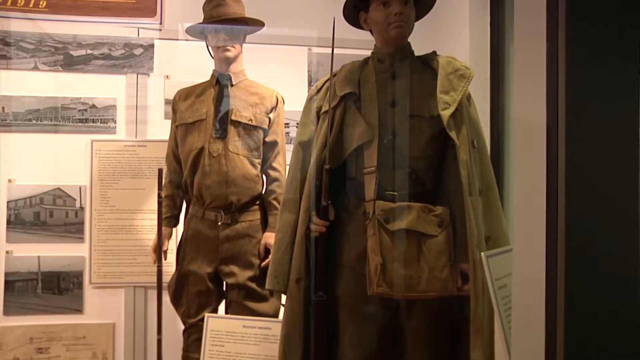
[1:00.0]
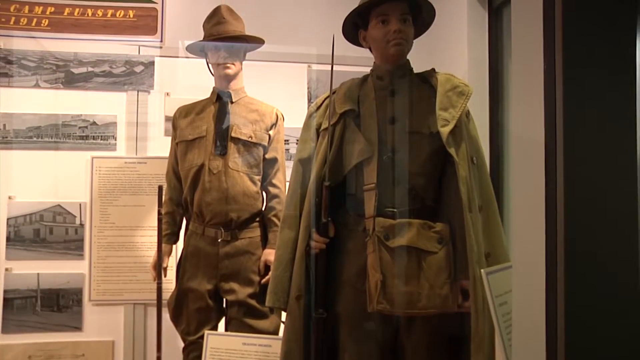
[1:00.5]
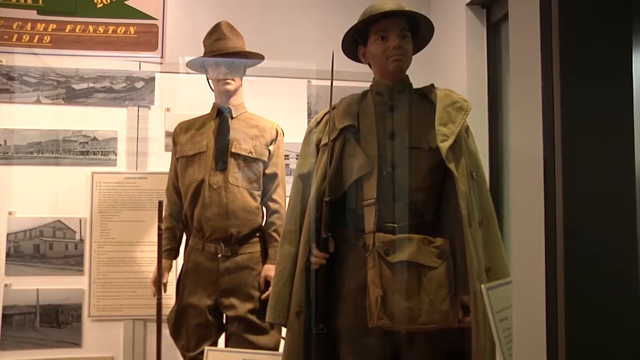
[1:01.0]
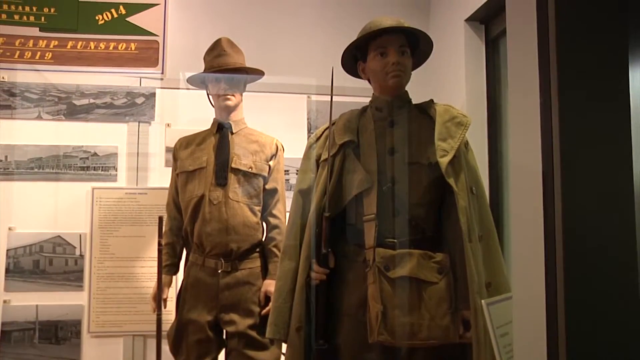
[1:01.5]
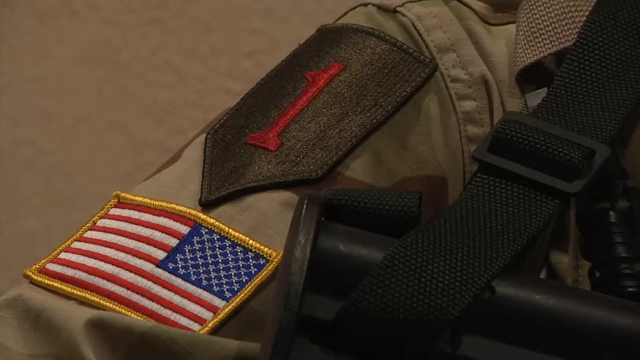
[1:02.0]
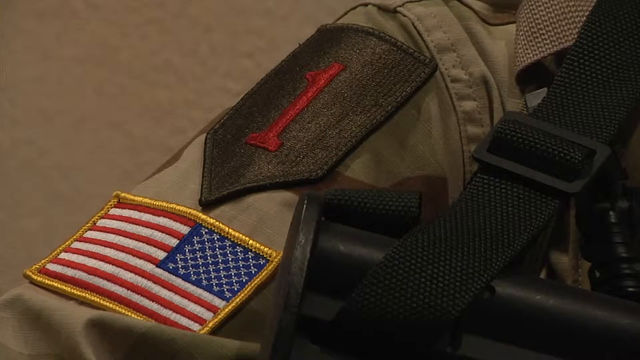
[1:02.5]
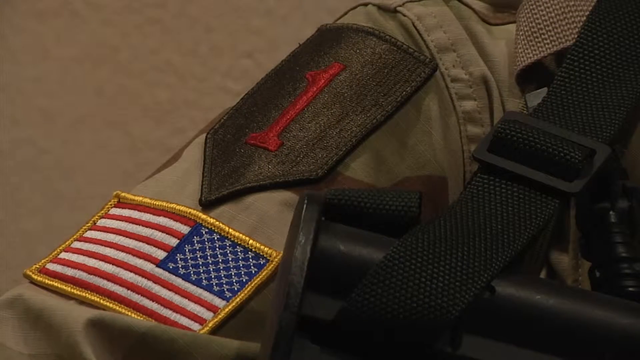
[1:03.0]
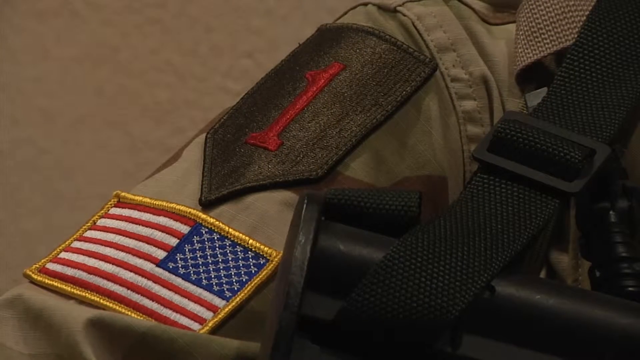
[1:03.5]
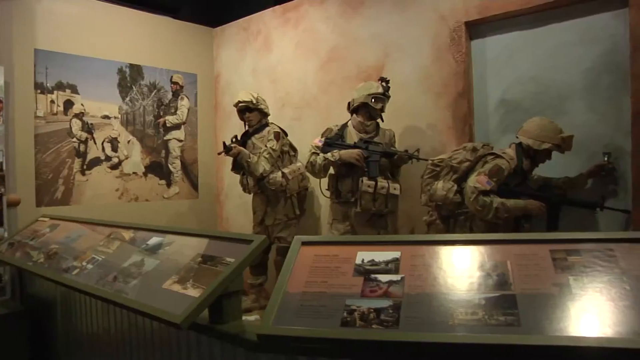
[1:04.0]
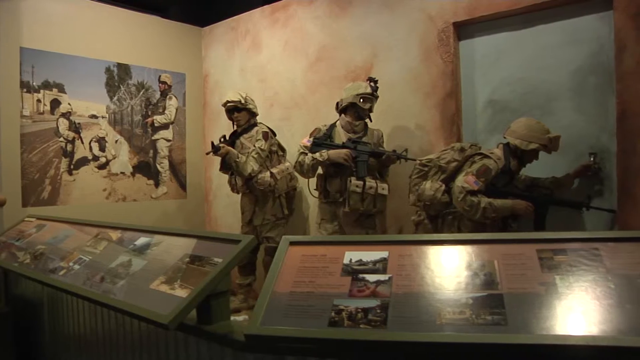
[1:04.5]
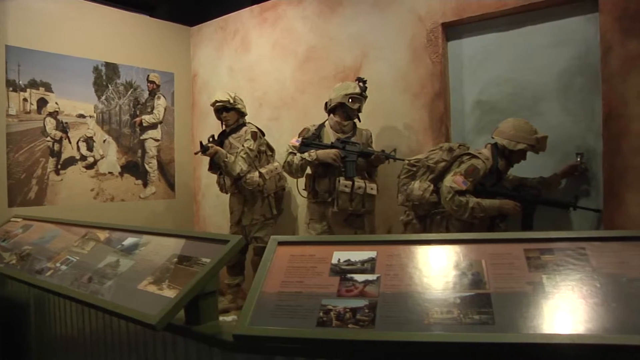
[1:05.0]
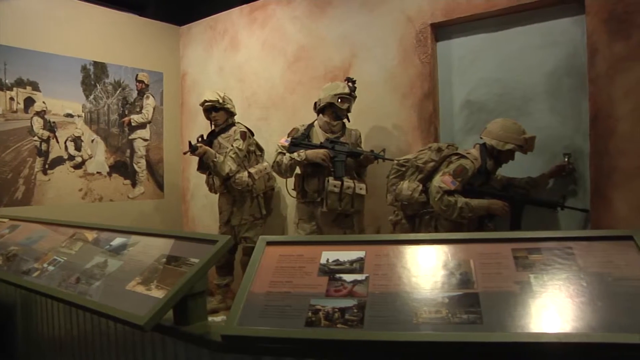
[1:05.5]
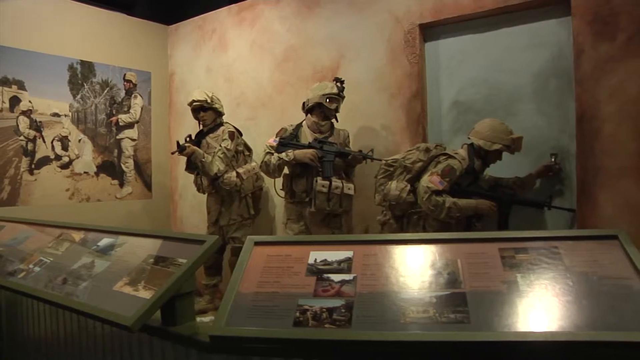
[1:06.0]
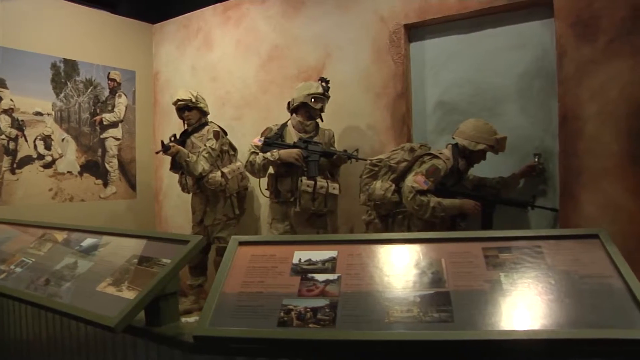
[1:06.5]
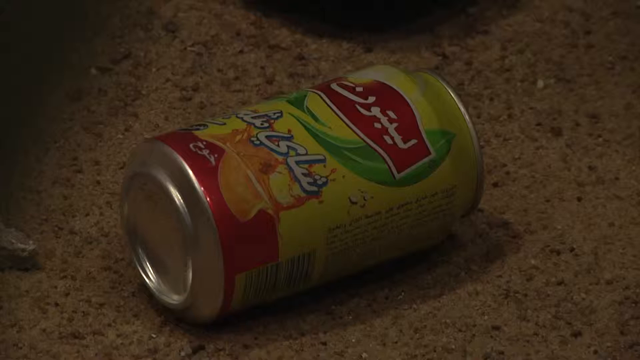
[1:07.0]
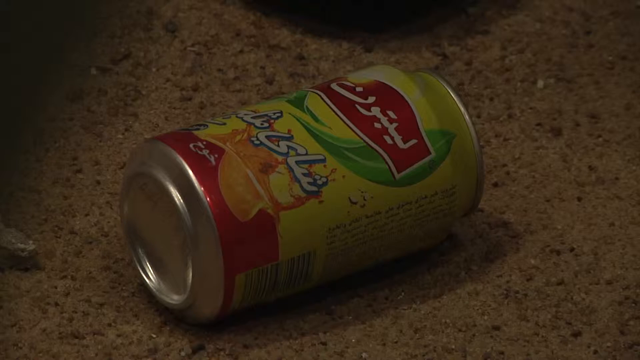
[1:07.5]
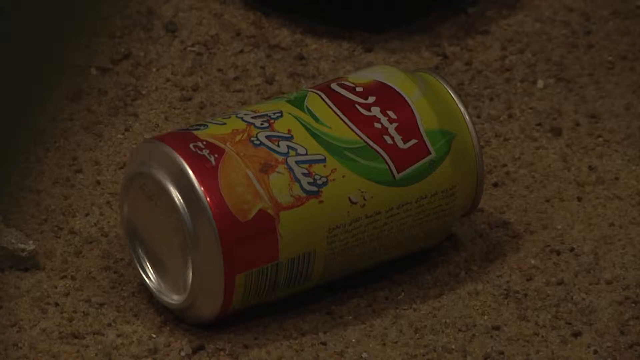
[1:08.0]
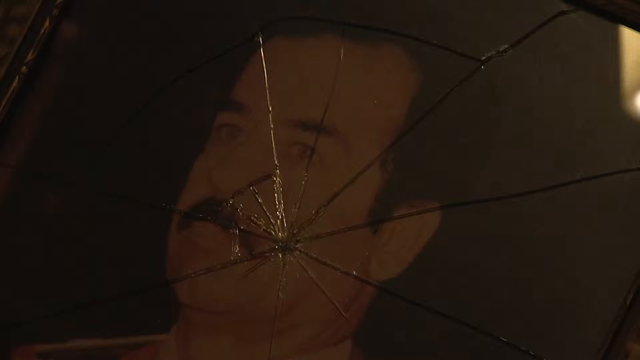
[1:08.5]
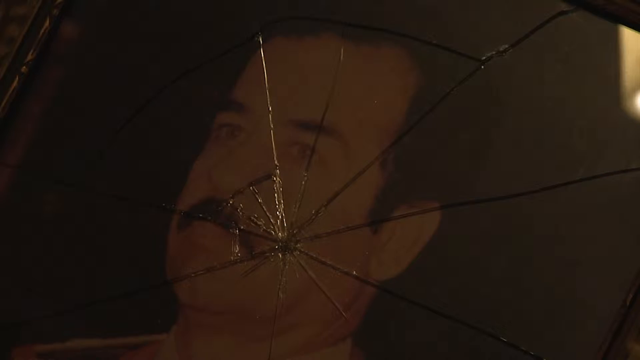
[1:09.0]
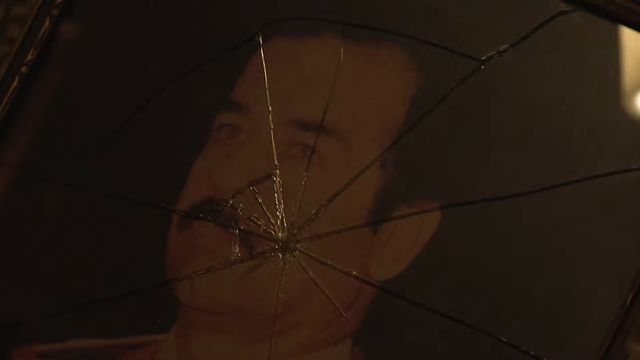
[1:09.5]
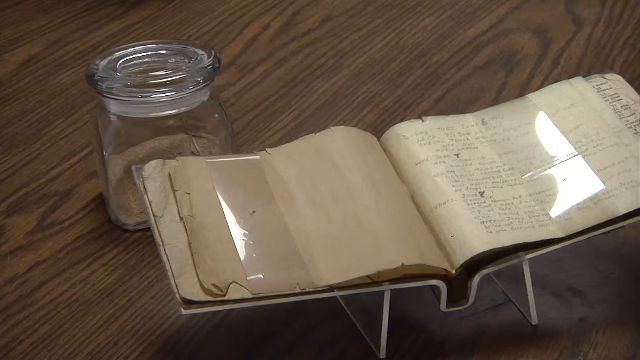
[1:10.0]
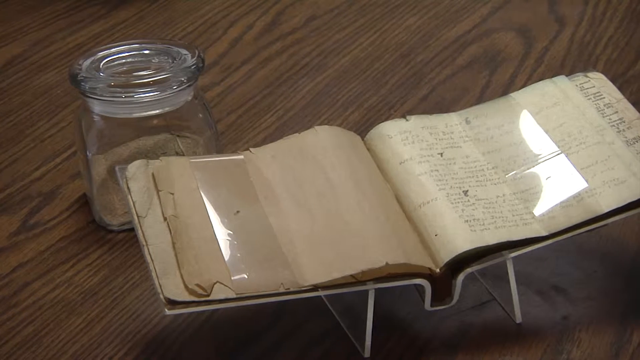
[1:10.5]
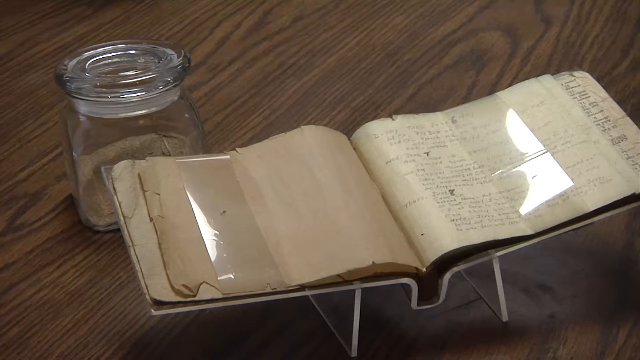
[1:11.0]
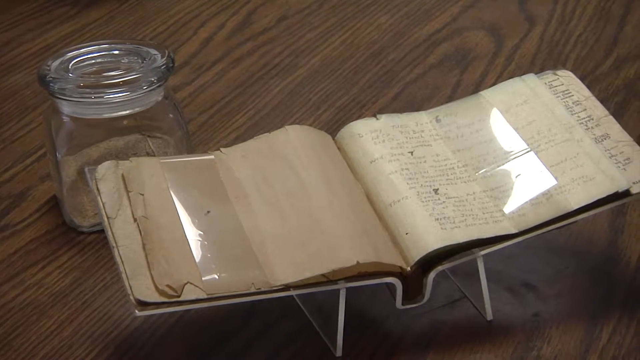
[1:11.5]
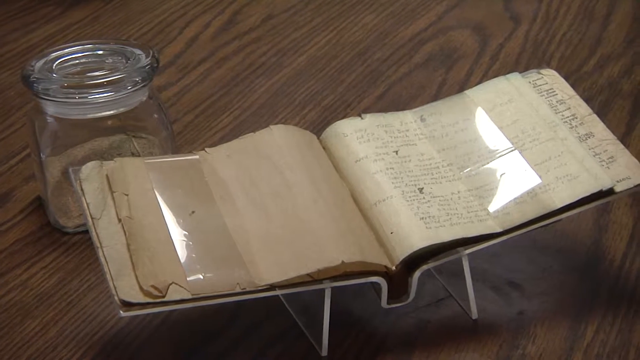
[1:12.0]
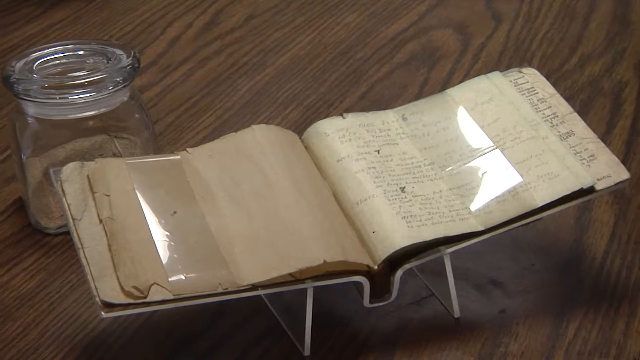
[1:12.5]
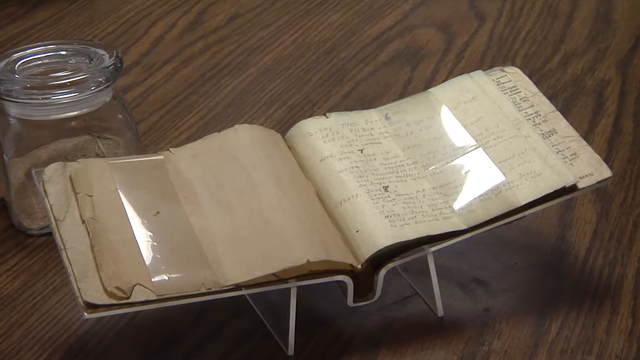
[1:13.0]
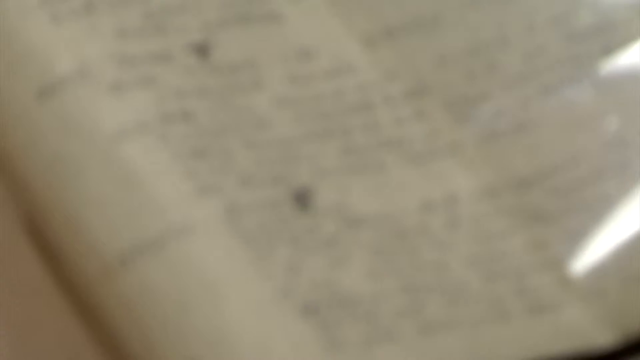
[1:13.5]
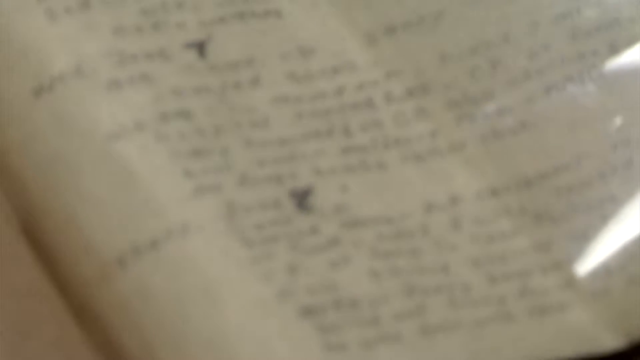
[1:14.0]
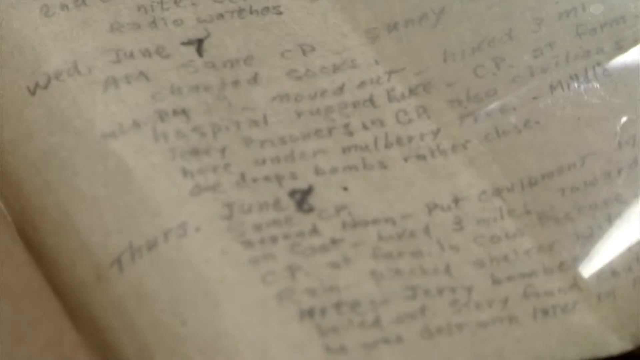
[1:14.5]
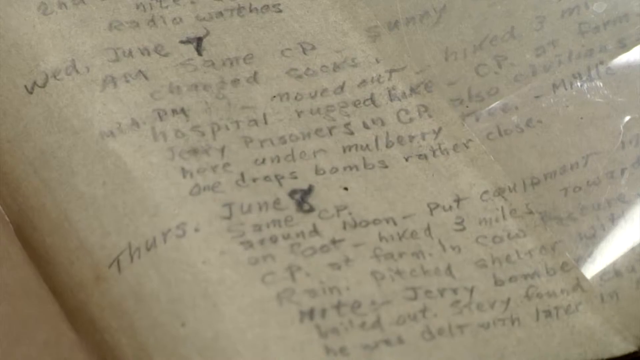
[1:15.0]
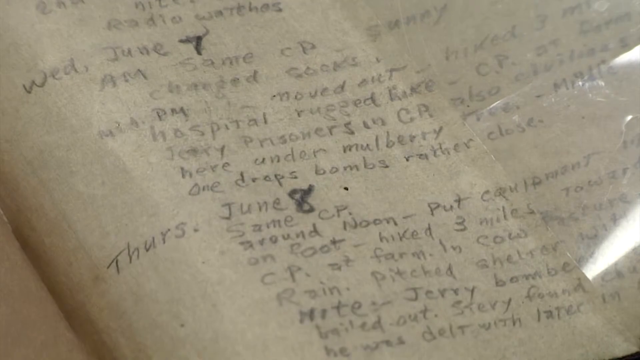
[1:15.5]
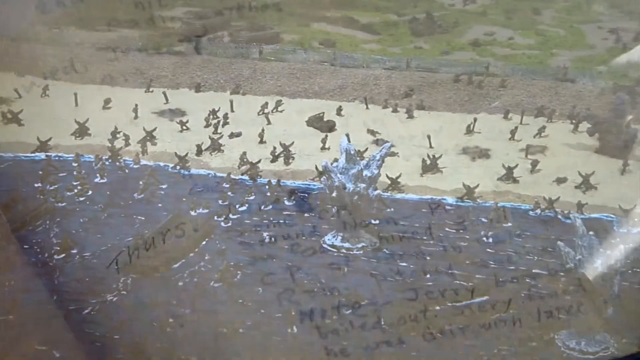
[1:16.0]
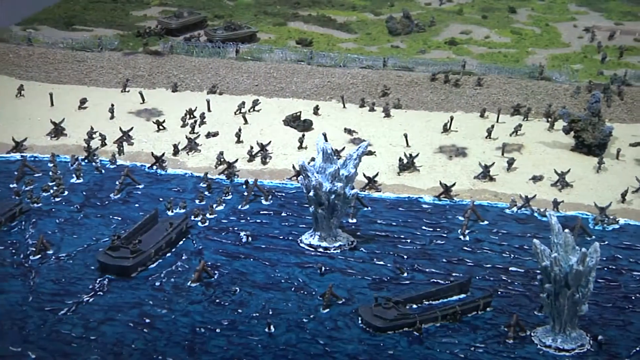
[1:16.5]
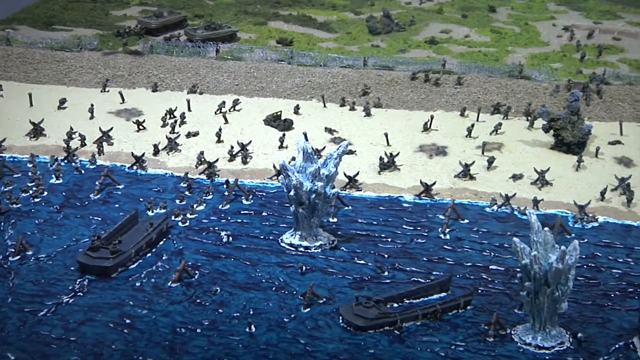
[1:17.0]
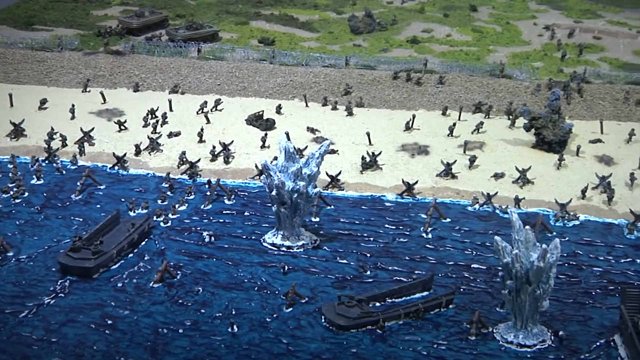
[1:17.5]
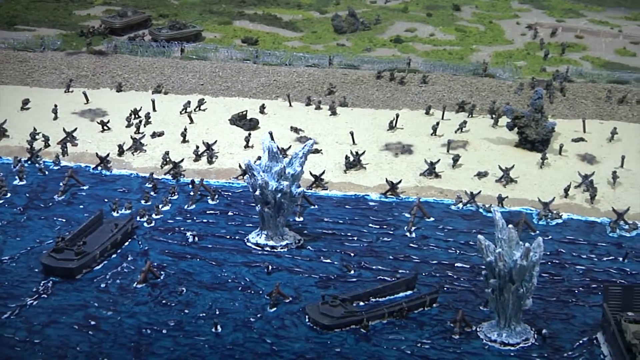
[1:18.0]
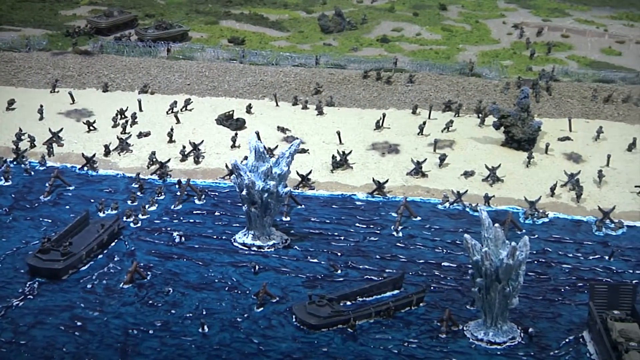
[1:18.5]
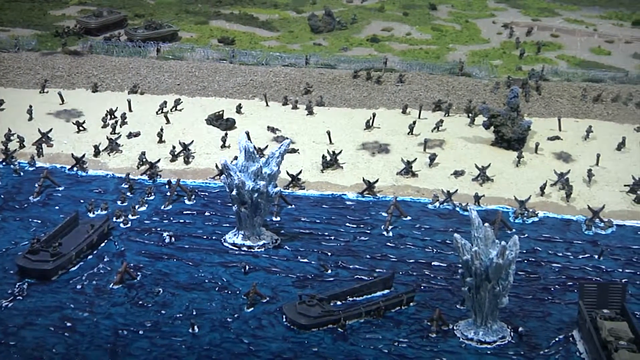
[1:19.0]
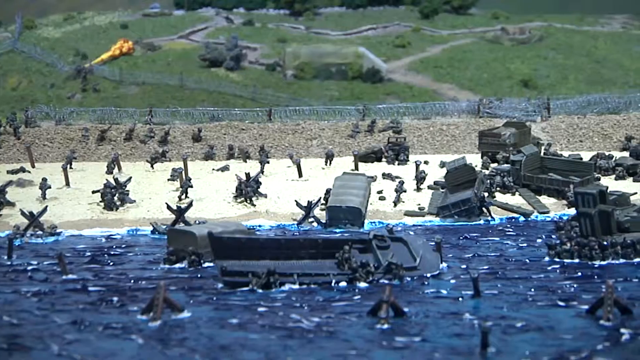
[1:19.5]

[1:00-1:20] The museum, dedicated to the U.S. Cavalry, shows different uniforms that were used. World War II soldiers are shown, then a portrait of Saddam Hussein and some type of diary. A diorama, probably of the Normandy landing, shows troop-carrying boats, lots of protective obstacles on the beach to keep tanks from rolling in, and lots of soldiers storming the beaches. The video then cuts back to two mannequins wearing military costumes. One looks like World War I and wears jodhpurs, so he is possibly cavalry. The second's pants are not visible, but he has on a trench coat, a bayonet and a messenger bag.